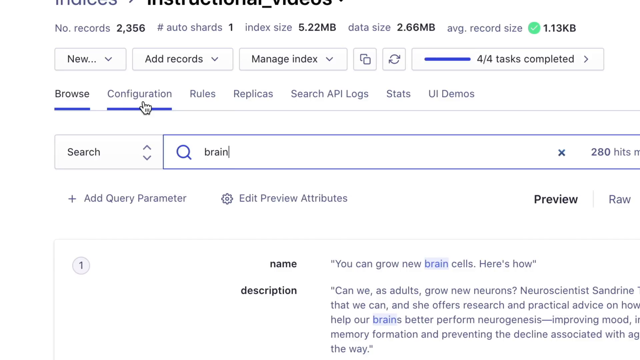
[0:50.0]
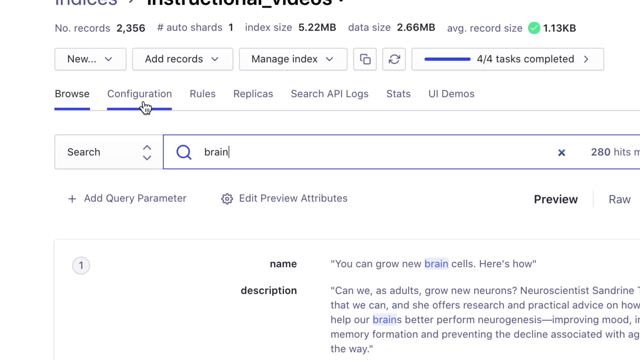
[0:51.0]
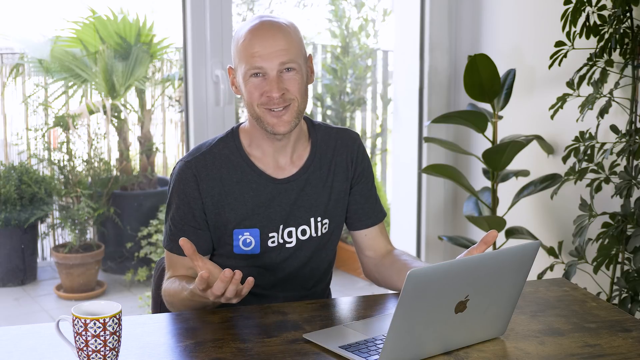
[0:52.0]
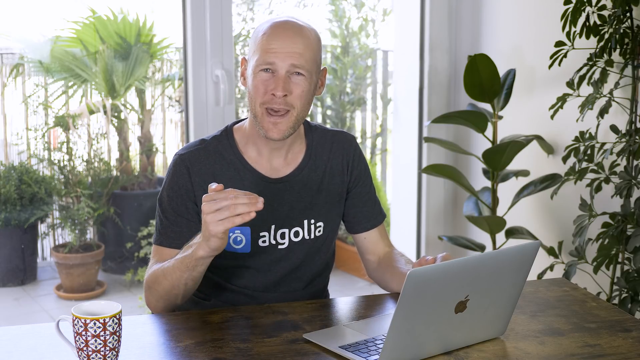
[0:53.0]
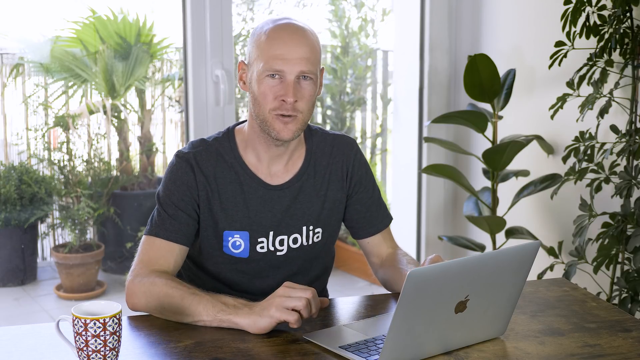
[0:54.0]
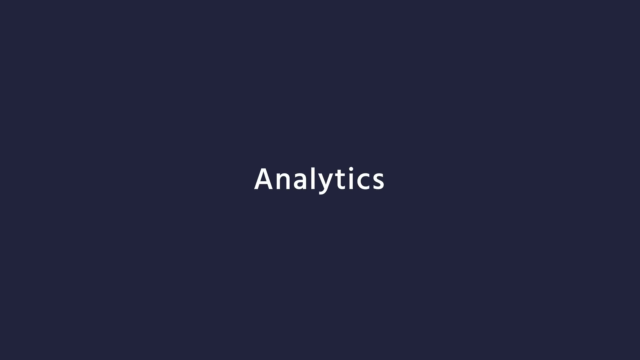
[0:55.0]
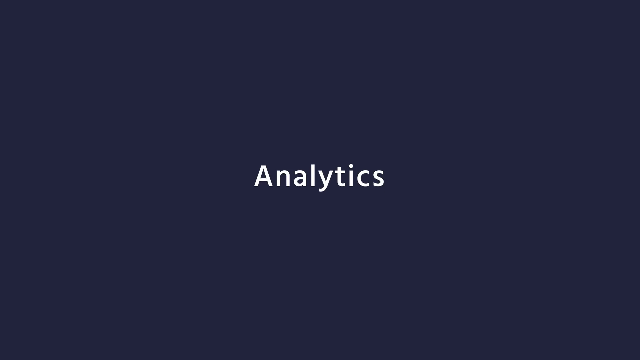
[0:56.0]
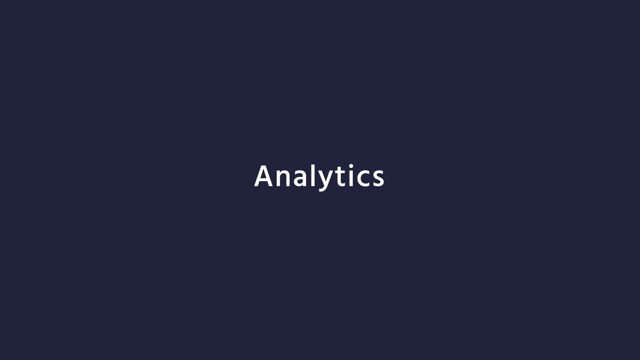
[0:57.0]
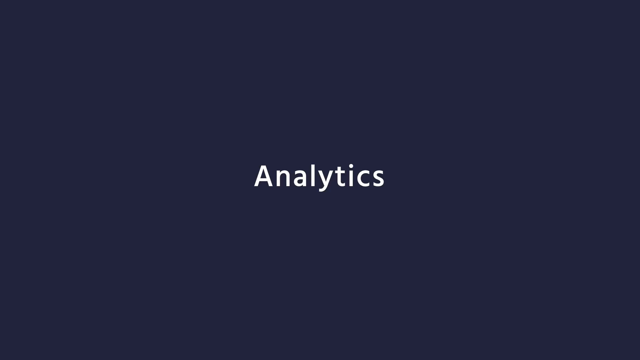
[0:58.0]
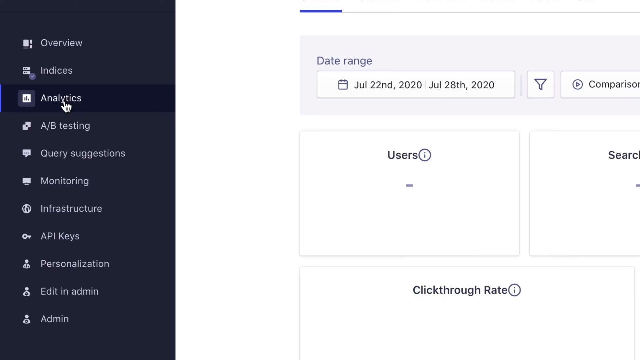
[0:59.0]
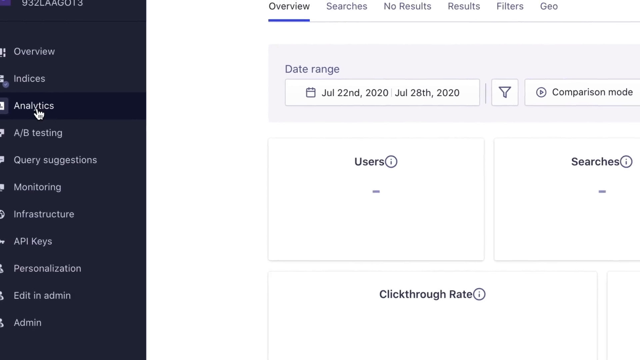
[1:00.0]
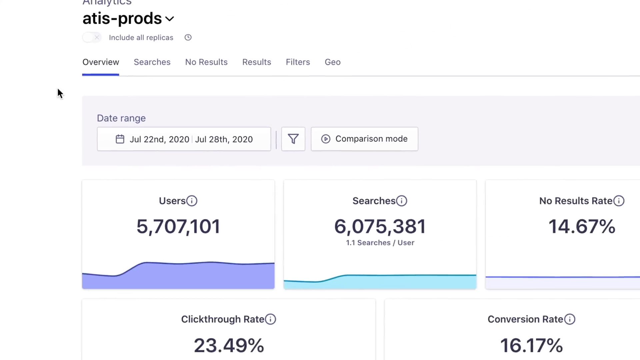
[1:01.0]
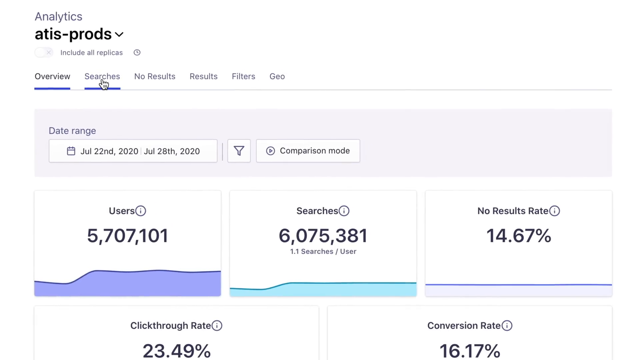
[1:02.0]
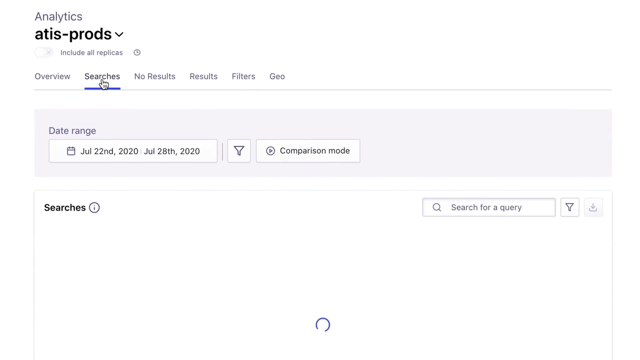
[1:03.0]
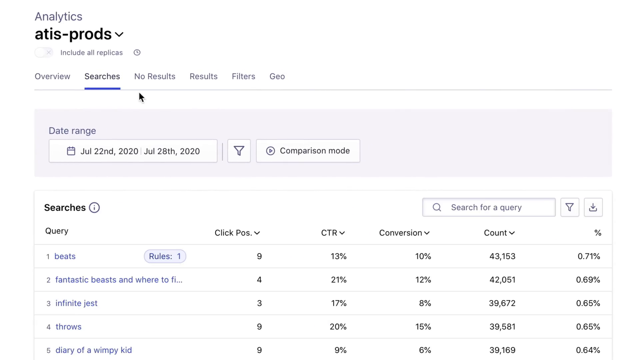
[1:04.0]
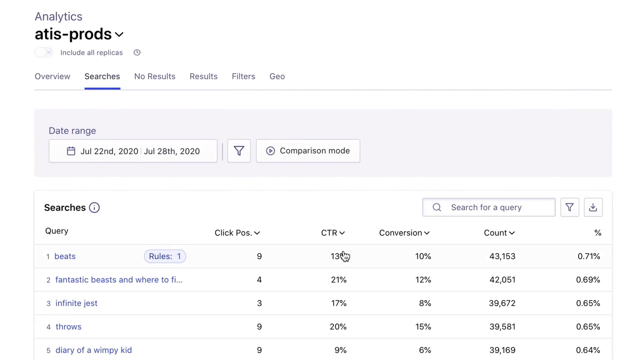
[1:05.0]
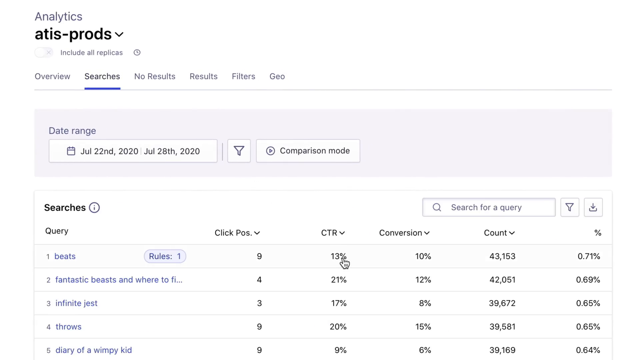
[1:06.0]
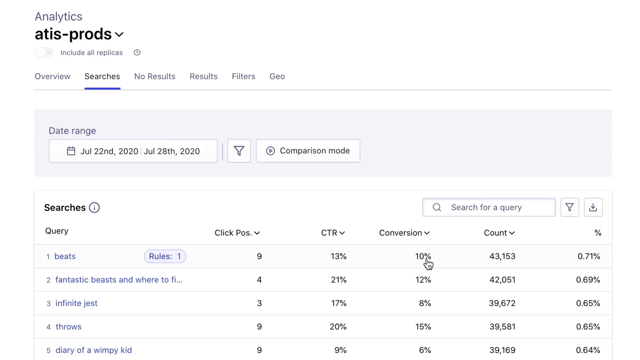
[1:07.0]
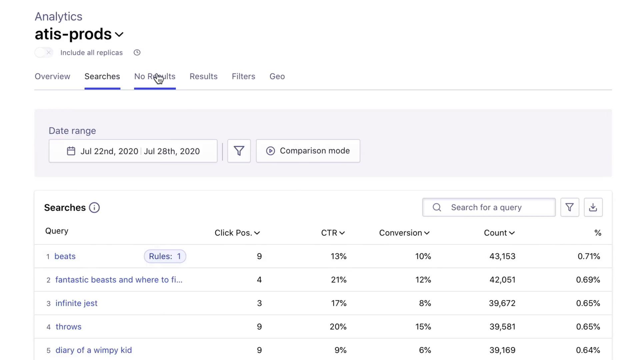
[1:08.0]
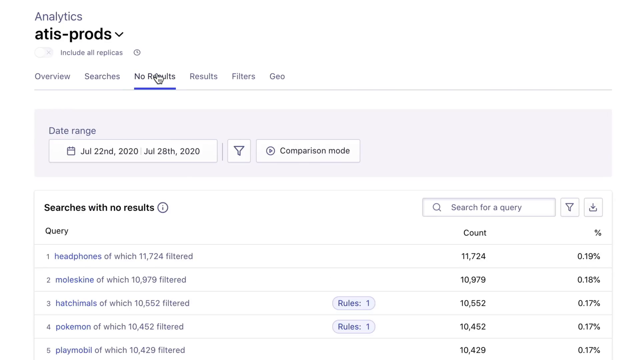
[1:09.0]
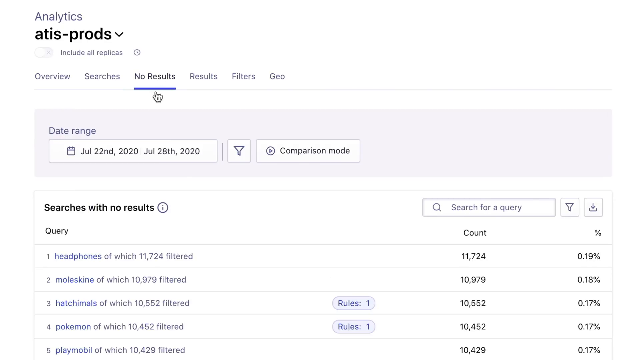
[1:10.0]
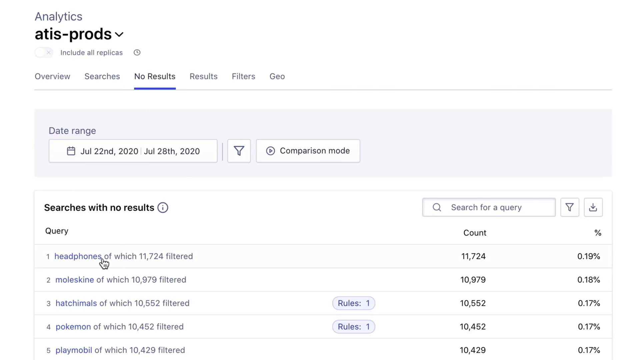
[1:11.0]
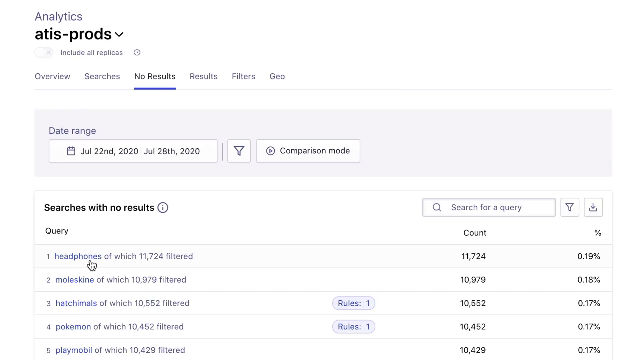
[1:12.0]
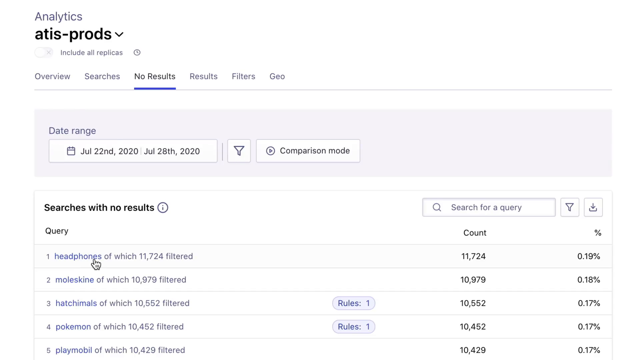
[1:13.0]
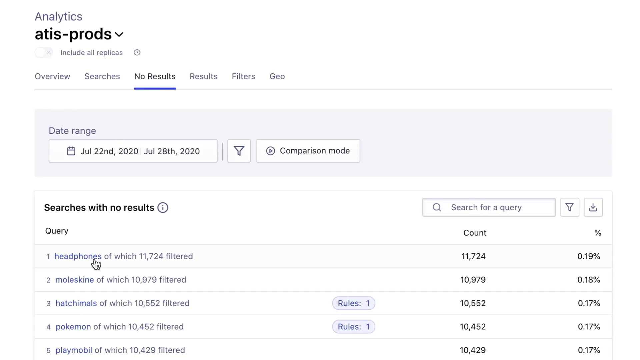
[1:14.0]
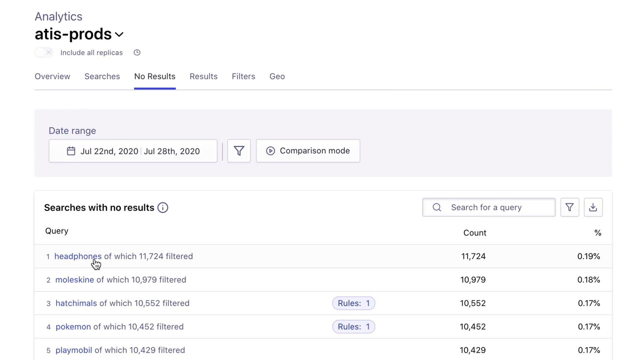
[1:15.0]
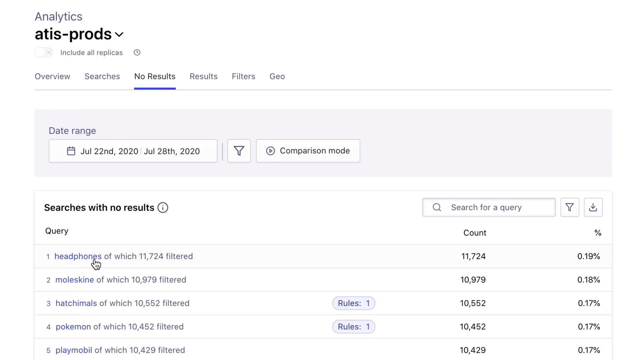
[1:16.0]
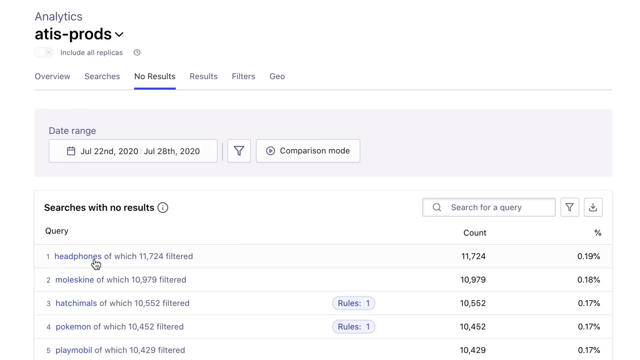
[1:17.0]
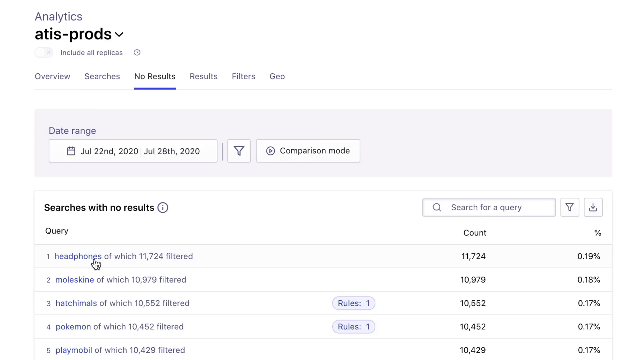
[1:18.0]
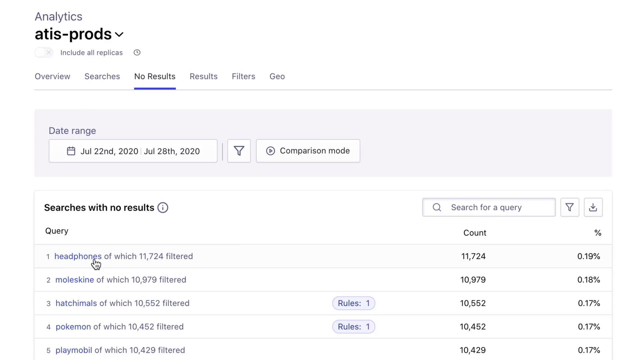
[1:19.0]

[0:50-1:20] The man, promoting a website or app called Algolia for business, shows the screen from his computer. He is on instructional videos, has entered the word "brain", and there are 280 hits. The video cuts to a shot of him putting his hands up in the air. He wears a black t-shirt that says "Algolia" with a stopwatch. The word "analytics" pops up. He goes back to the computer screen onto searches, clicks on "no results", and hovers around the word "headphones" under "query". Other entries underneath include "moleskin" and something like Pokemon.